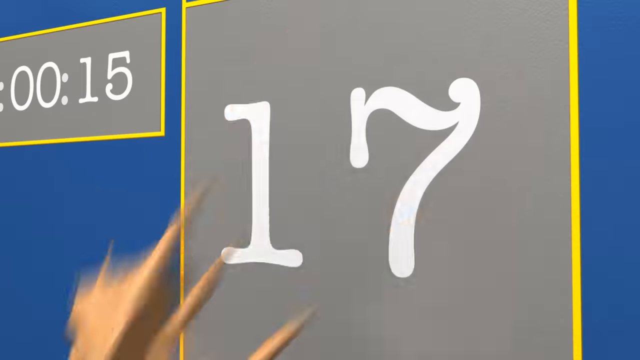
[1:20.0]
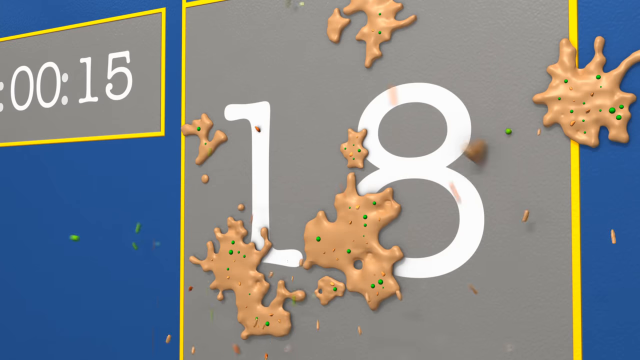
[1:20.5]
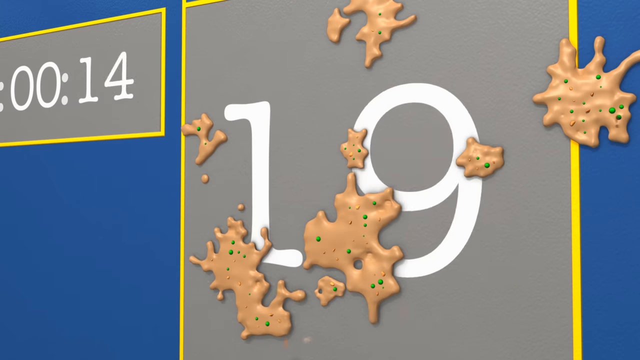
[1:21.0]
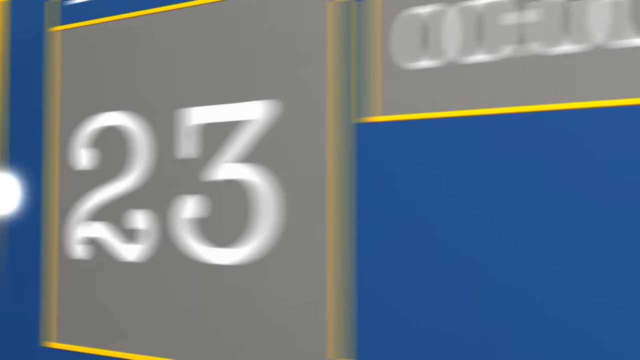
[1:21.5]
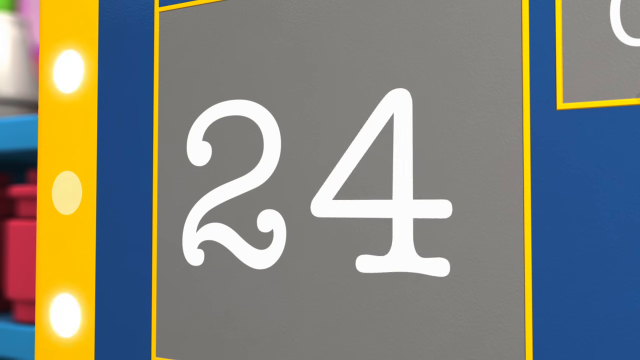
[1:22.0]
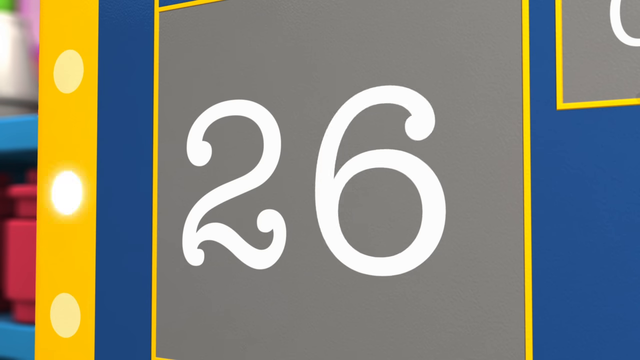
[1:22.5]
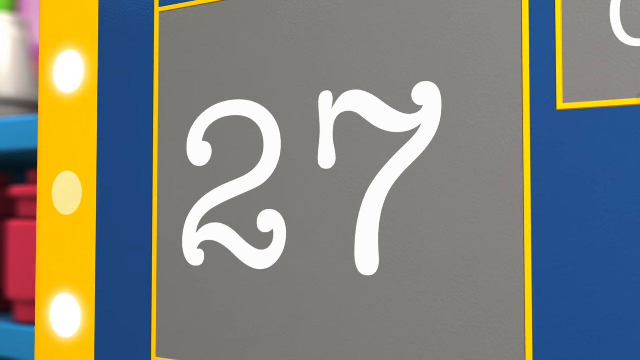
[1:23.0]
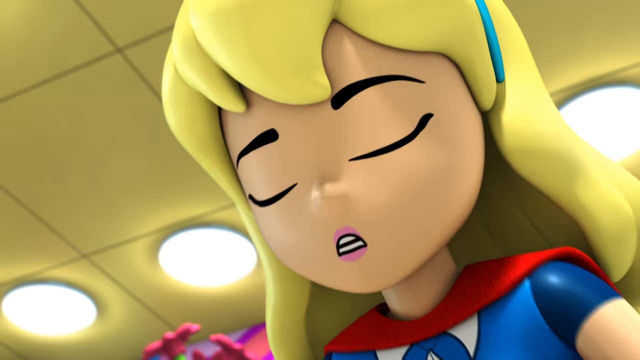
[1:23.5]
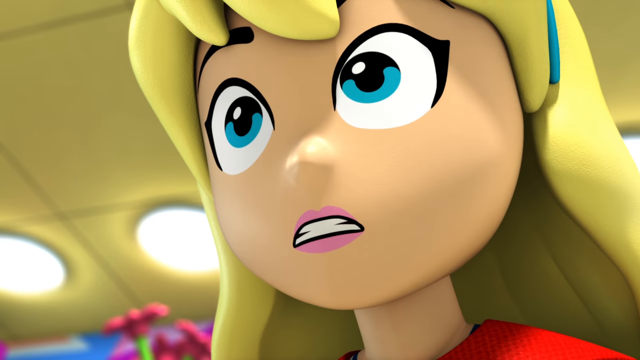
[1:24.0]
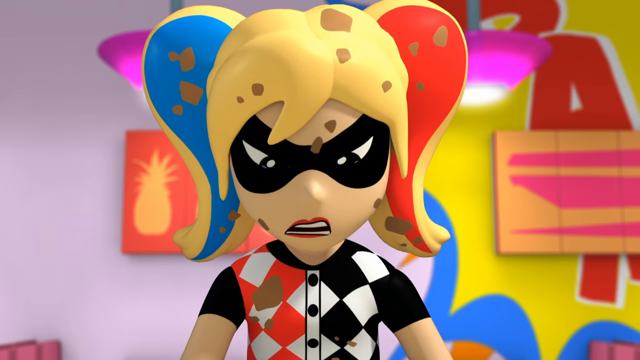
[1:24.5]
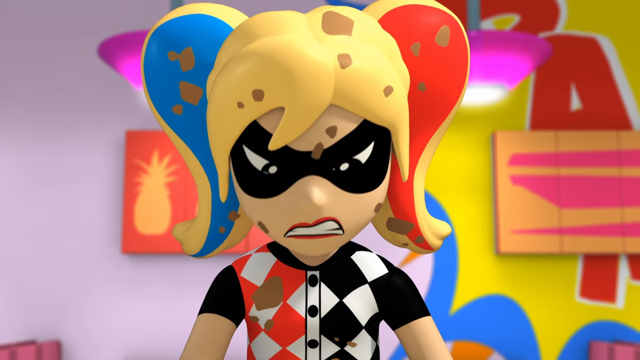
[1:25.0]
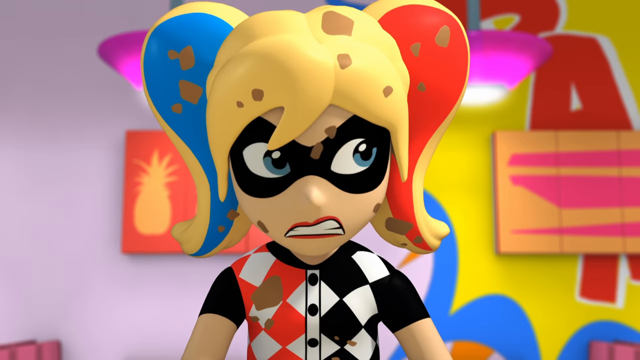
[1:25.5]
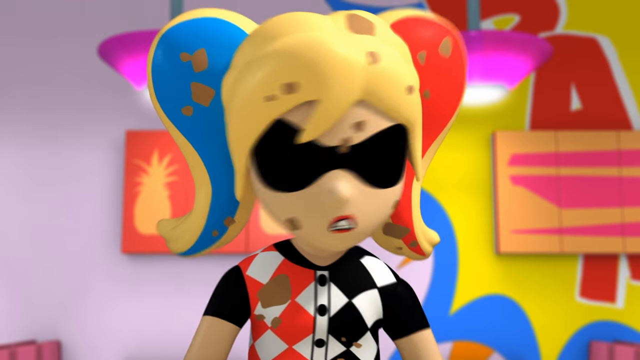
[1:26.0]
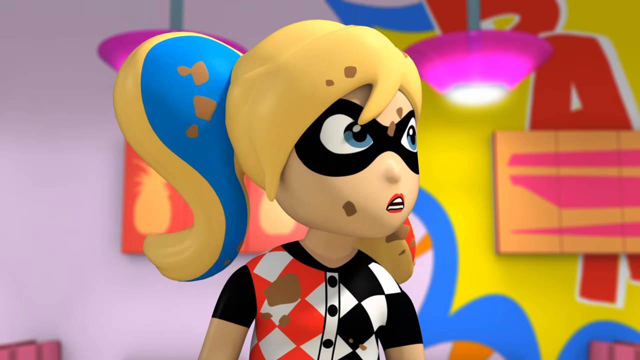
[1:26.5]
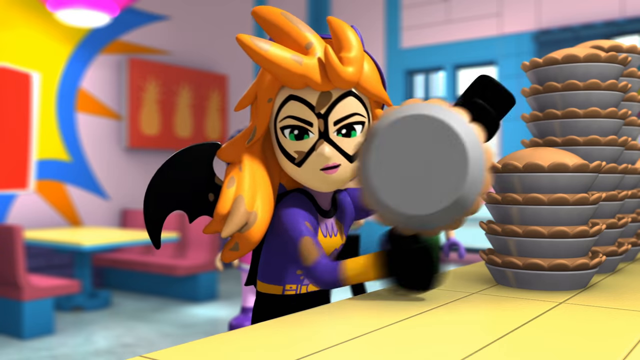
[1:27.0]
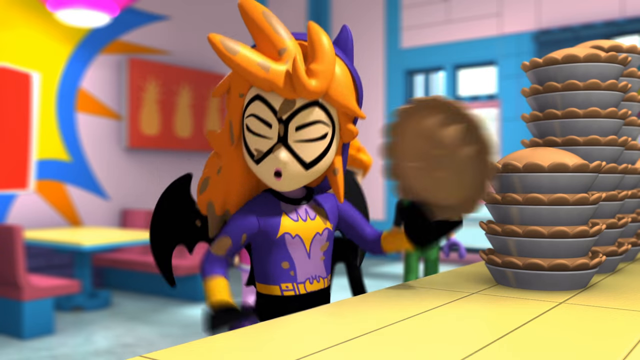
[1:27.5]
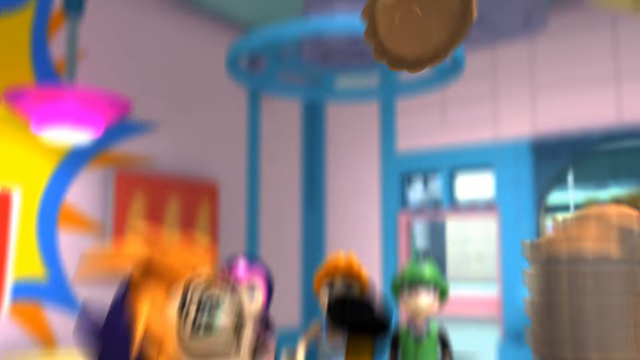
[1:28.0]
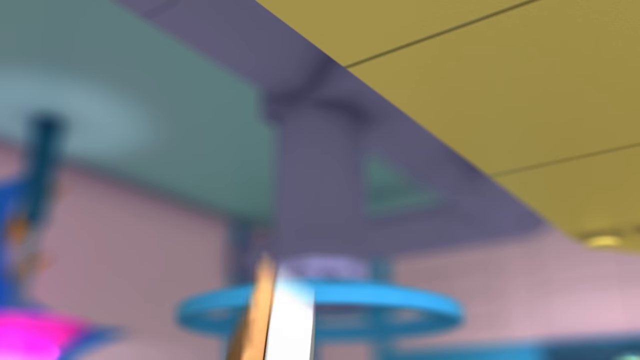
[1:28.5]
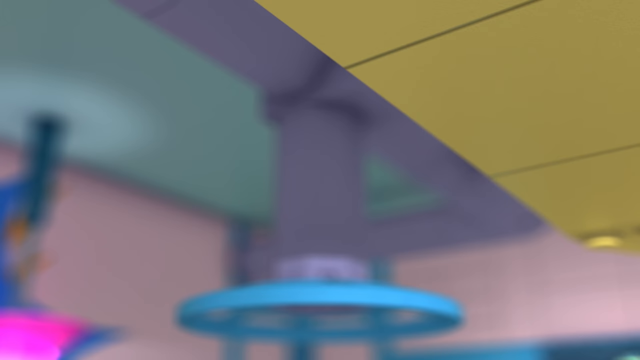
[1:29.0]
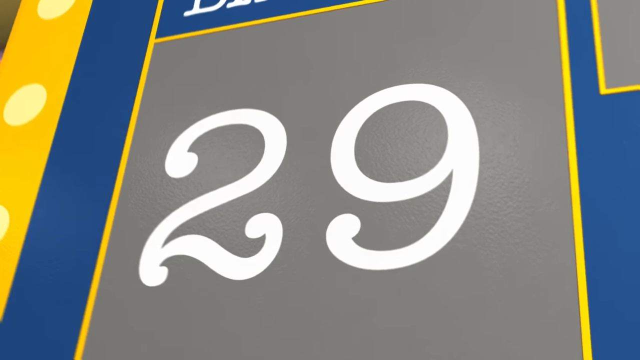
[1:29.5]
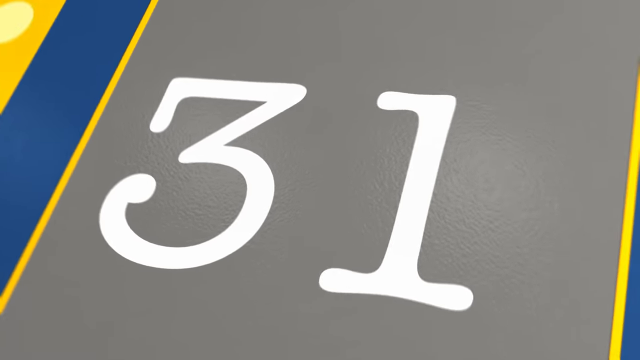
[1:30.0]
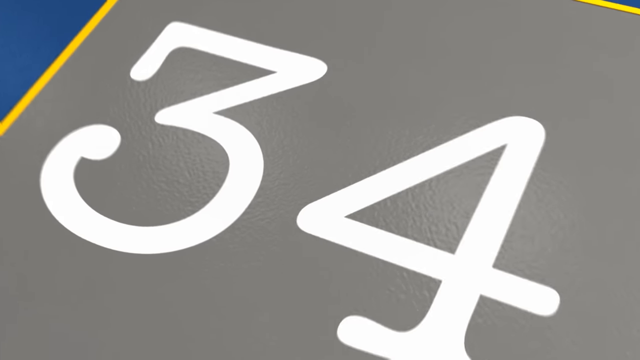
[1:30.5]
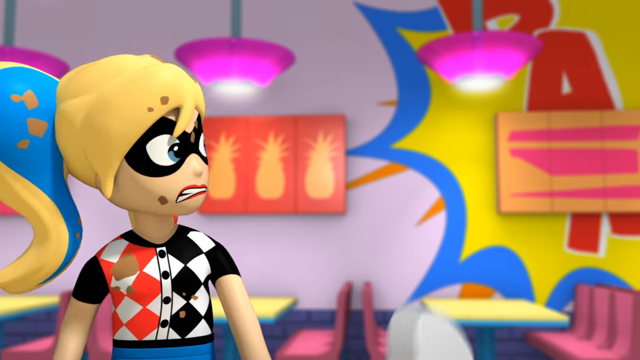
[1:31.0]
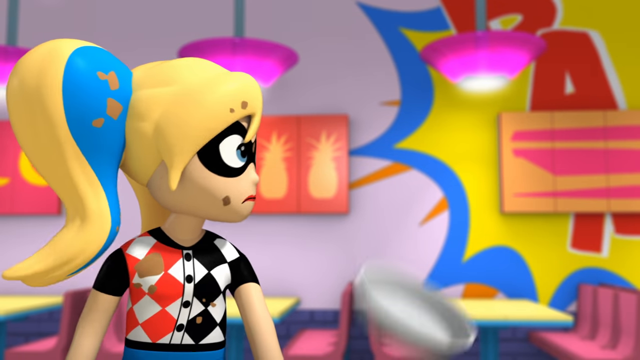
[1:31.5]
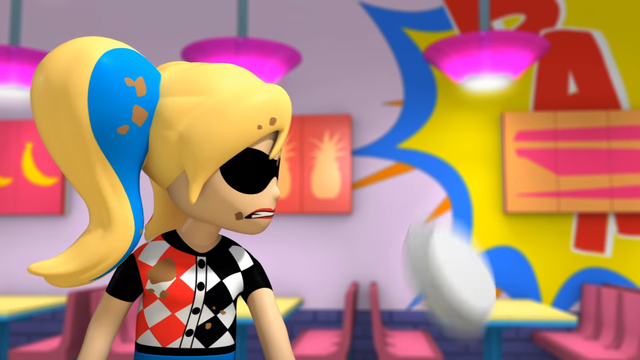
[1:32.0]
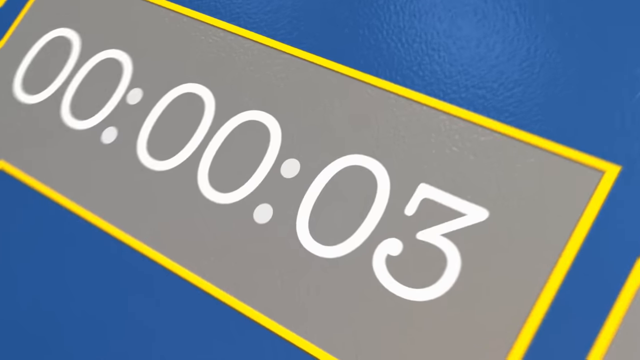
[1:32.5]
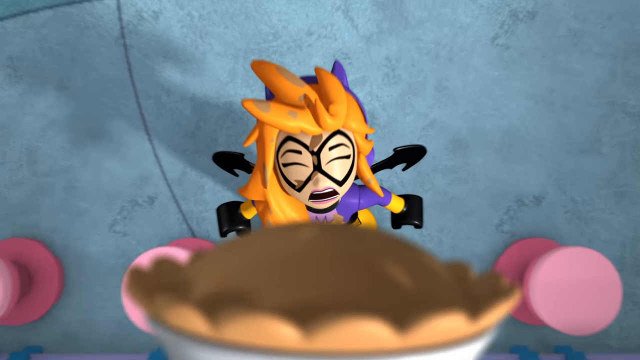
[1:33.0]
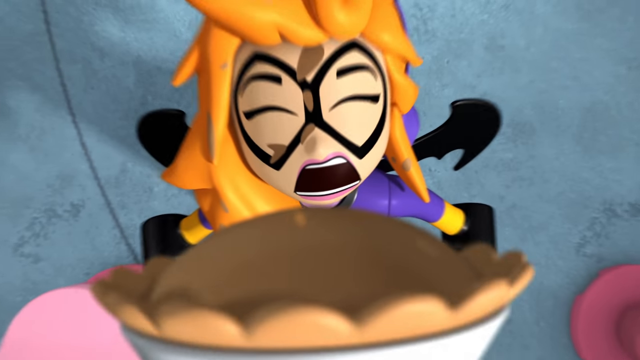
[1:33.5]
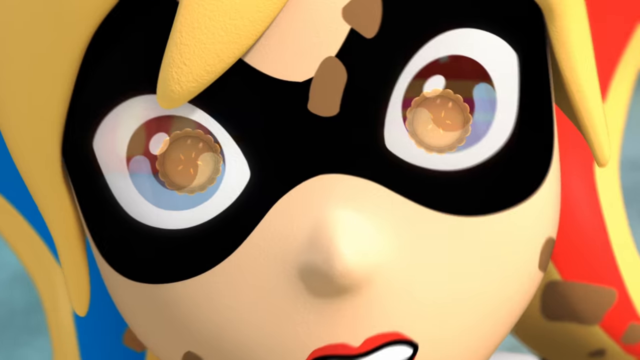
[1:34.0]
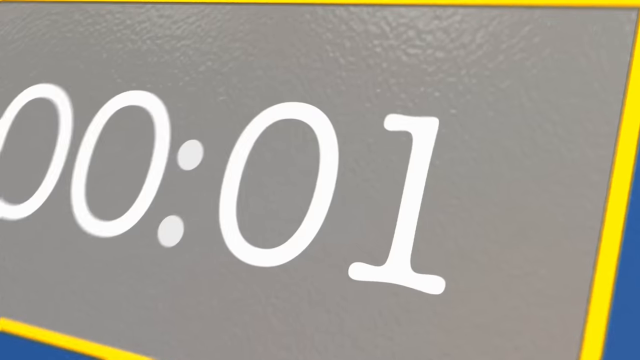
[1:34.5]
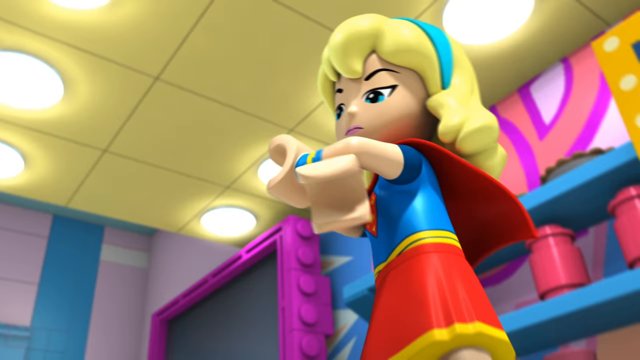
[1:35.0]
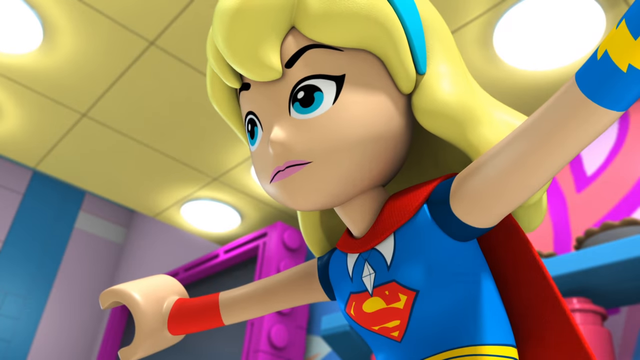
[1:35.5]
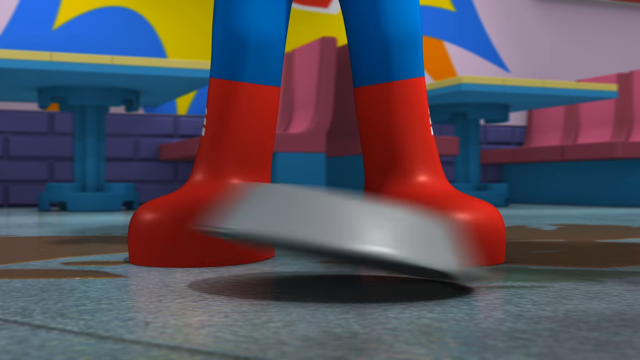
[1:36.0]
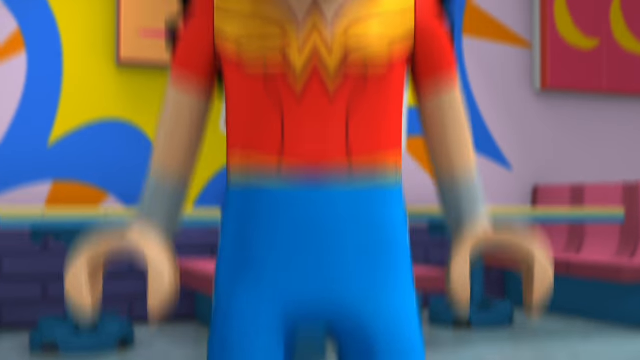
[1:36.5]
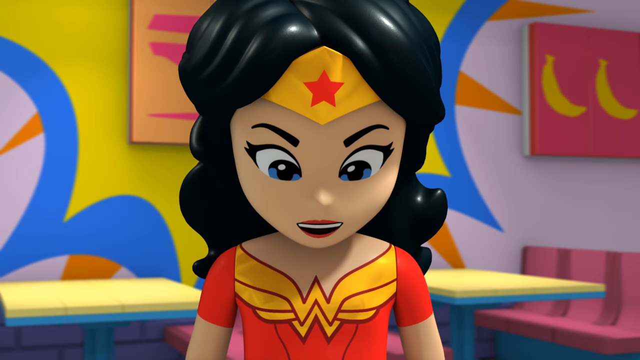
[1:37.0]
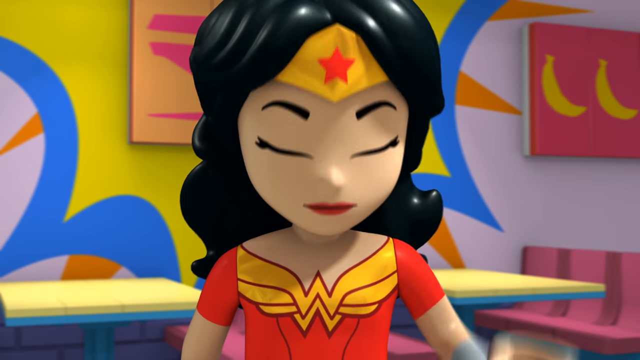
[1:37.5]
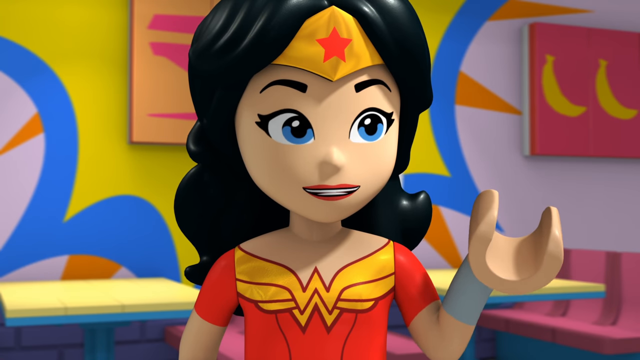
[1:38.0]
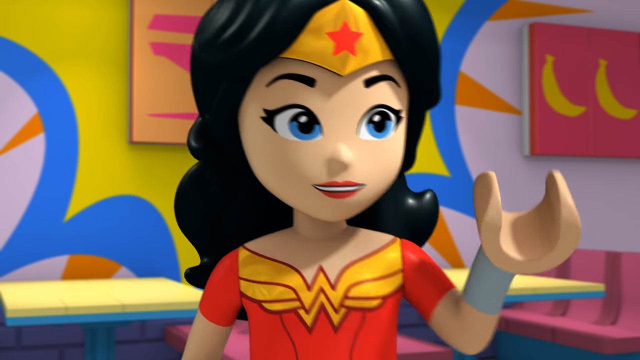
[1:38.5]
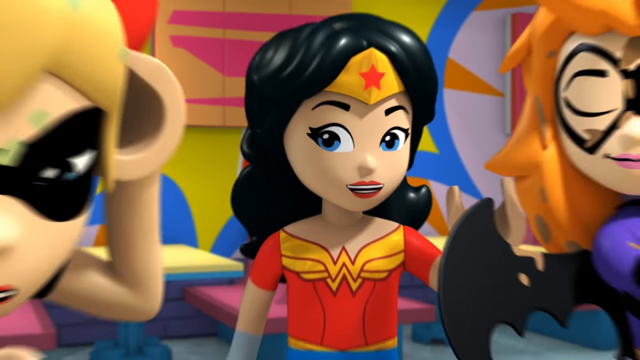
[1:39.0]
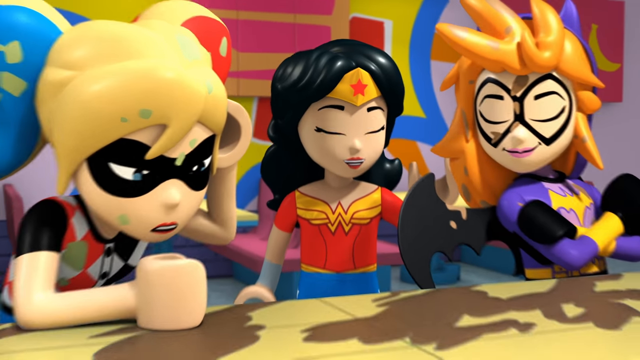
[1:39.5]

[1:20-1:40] The scoreboard shows the time at less than 15 seconds. One score goes from 17 to 18, and another flies up from 23 to 27. The competitors' faces are messy and their hair is messed up. Batgirl spins a pie in the air and some of it flies off. Supergirl then stops the race because it is over; who won is unclear. When she stops it, Wonder Woman looks down as a silver pie container rolls between her legs.